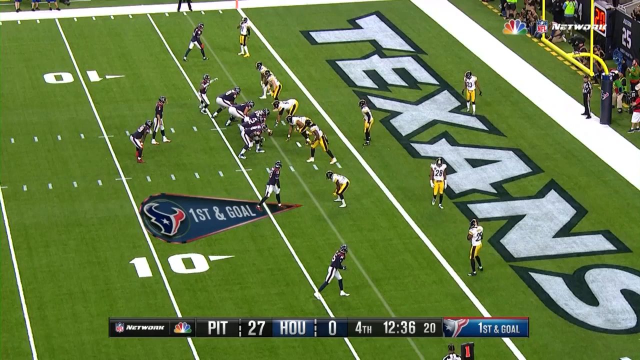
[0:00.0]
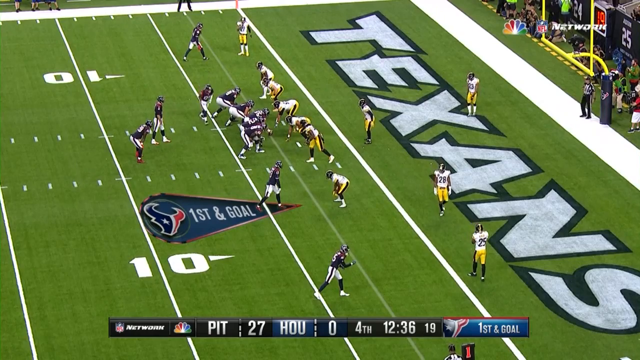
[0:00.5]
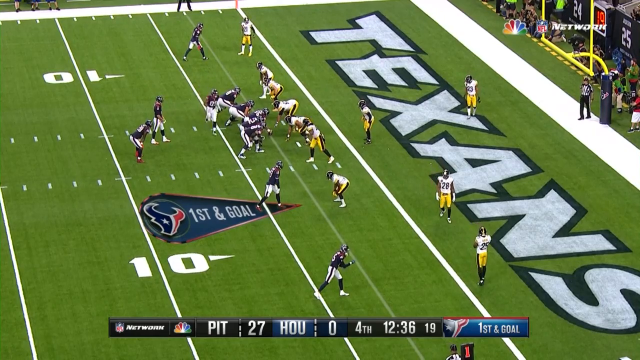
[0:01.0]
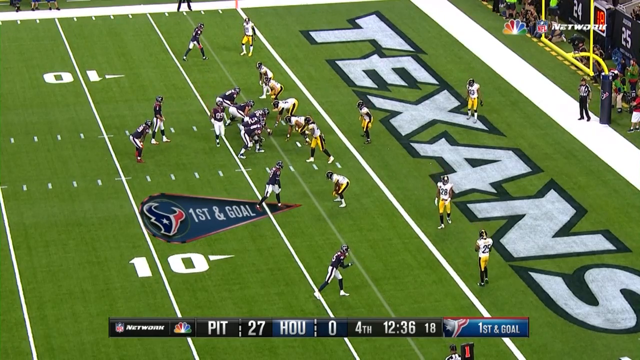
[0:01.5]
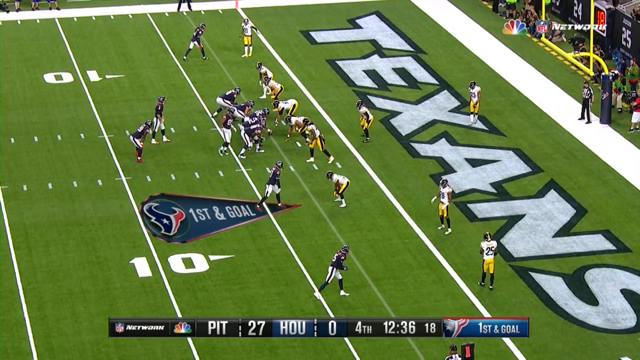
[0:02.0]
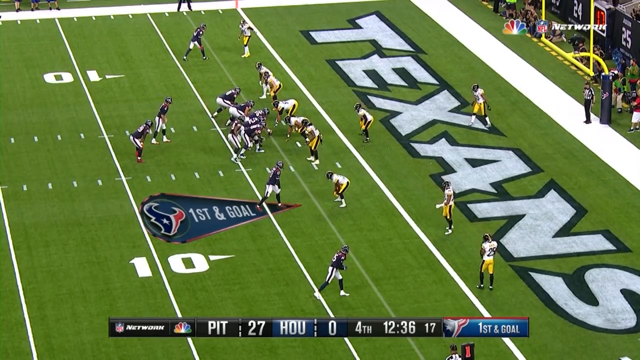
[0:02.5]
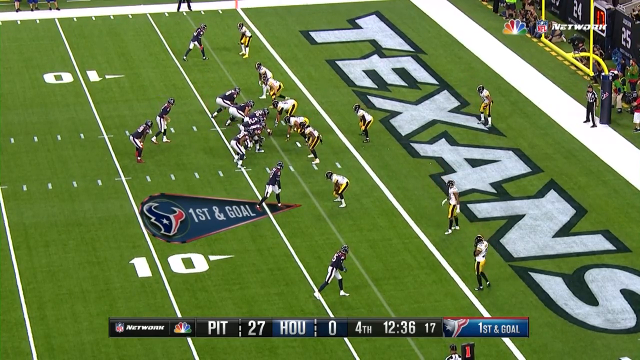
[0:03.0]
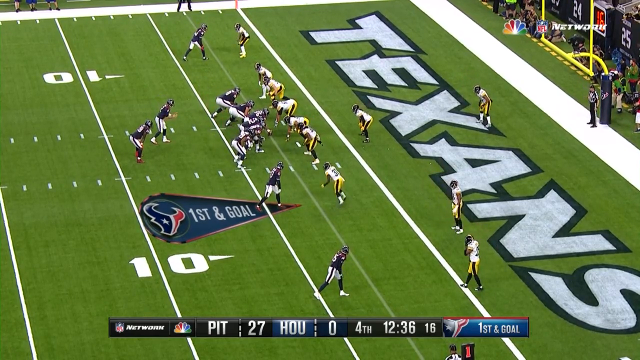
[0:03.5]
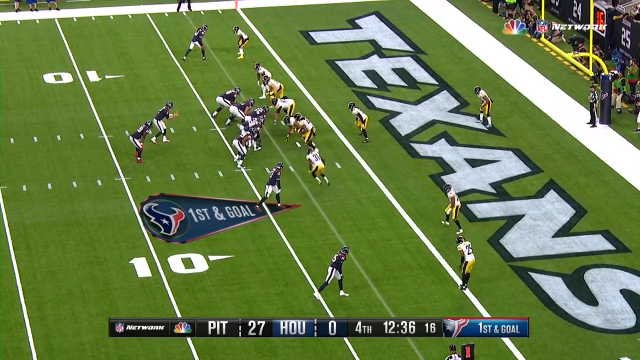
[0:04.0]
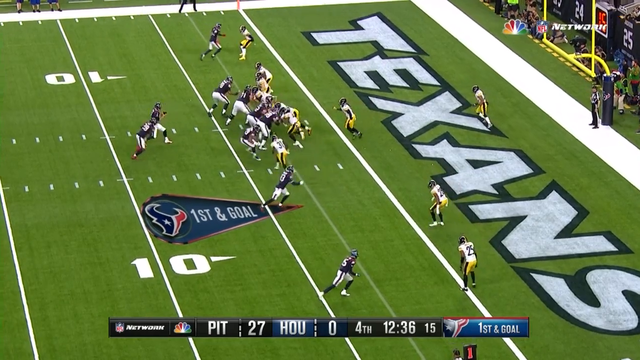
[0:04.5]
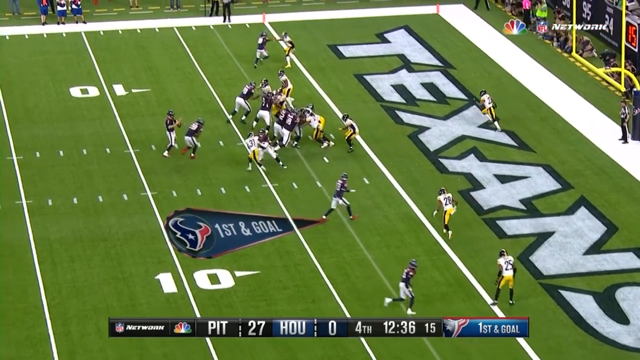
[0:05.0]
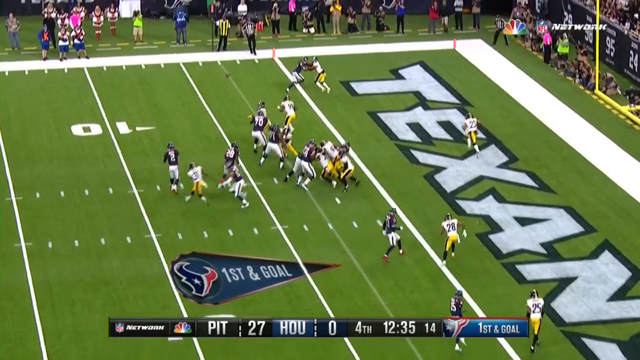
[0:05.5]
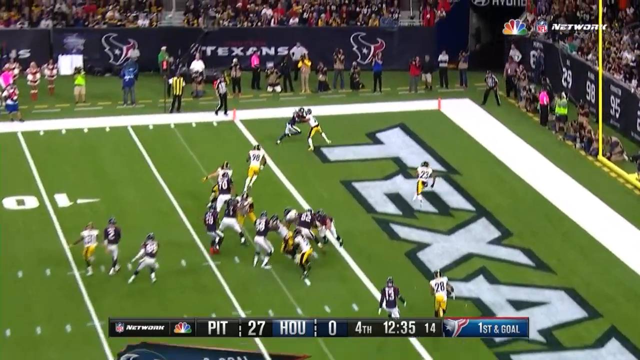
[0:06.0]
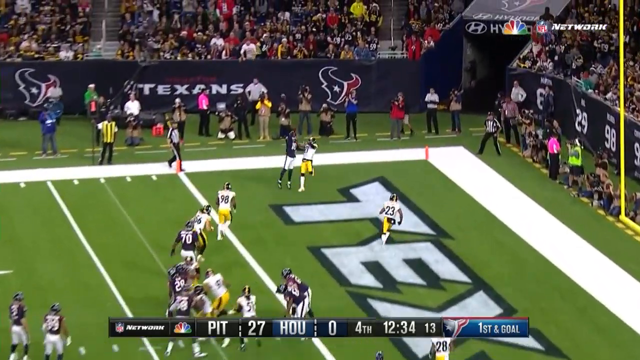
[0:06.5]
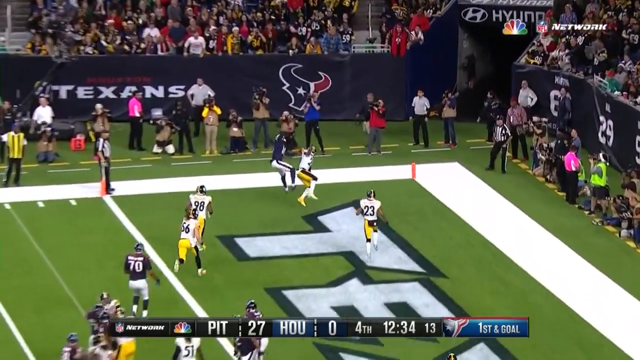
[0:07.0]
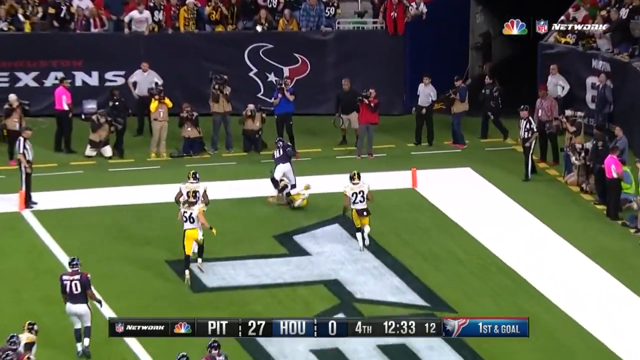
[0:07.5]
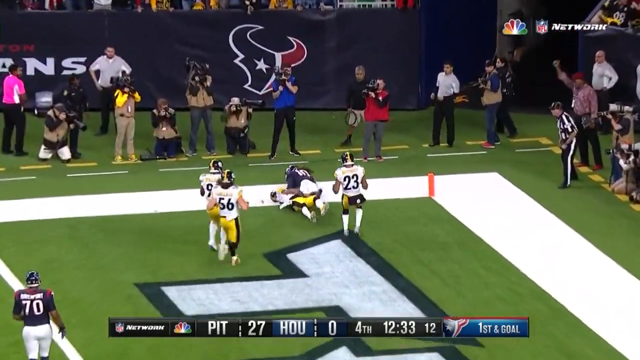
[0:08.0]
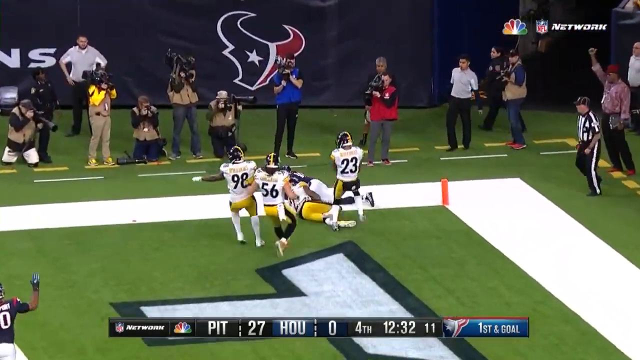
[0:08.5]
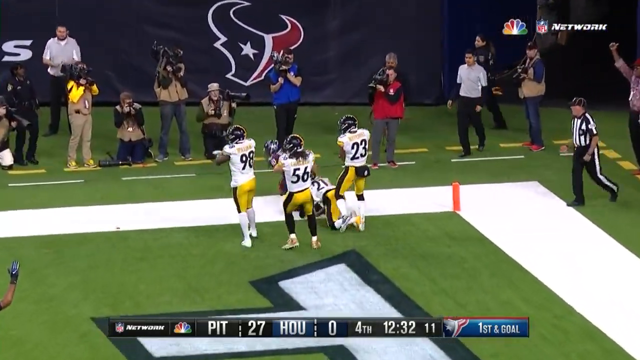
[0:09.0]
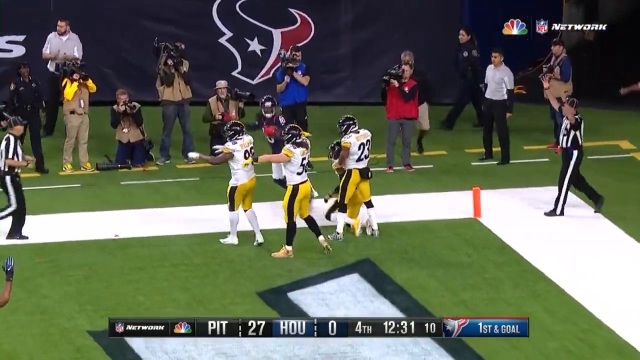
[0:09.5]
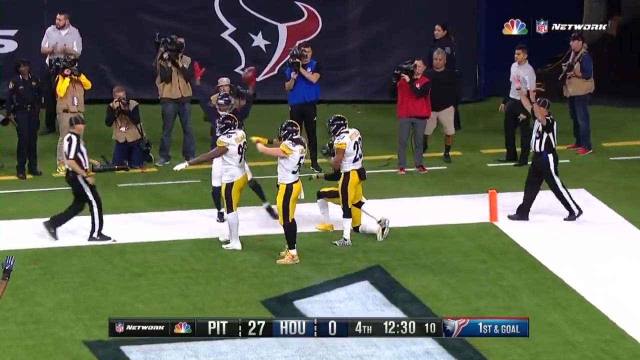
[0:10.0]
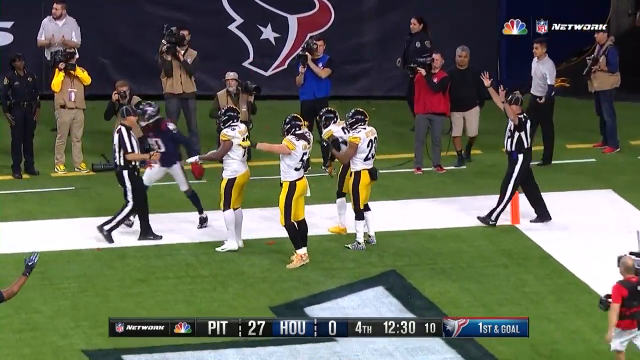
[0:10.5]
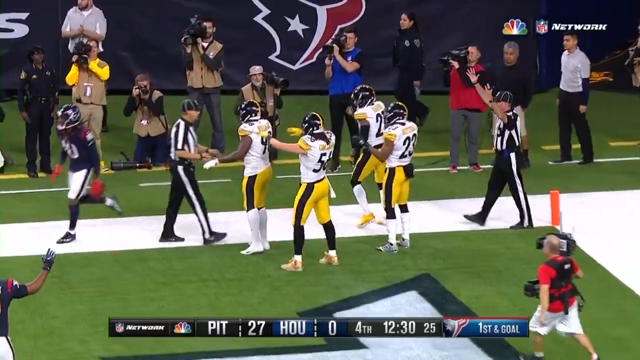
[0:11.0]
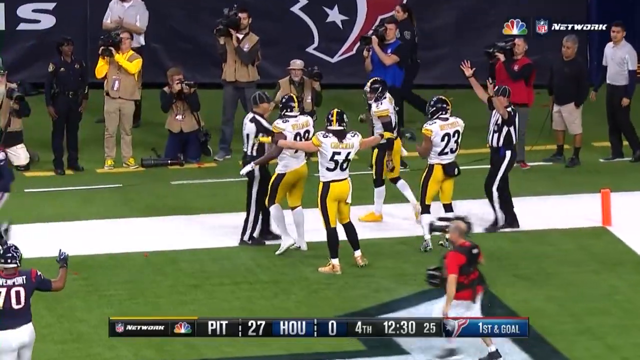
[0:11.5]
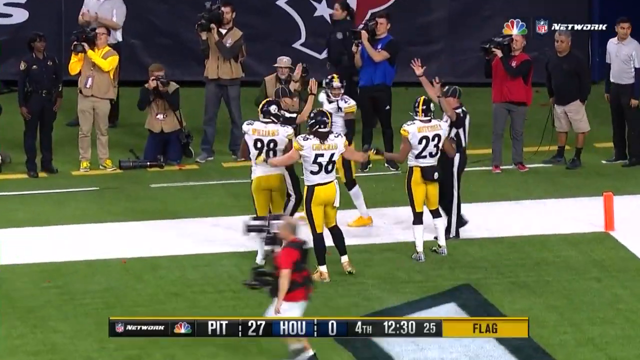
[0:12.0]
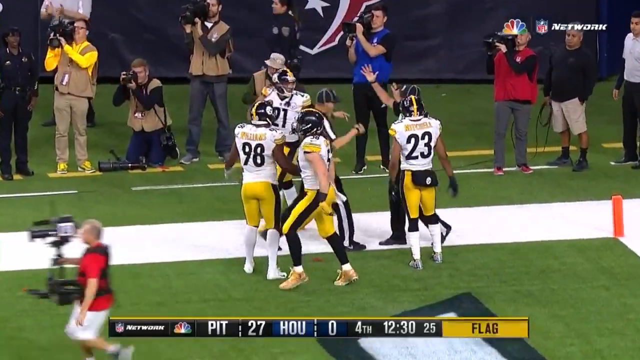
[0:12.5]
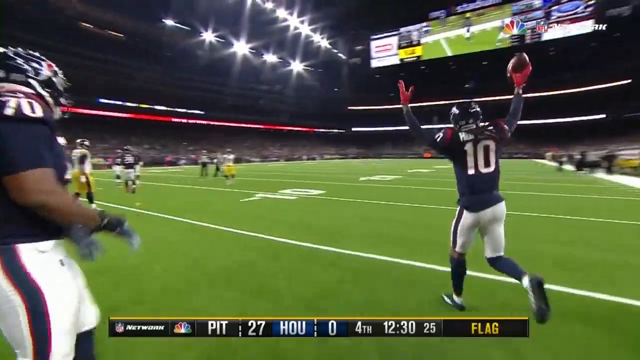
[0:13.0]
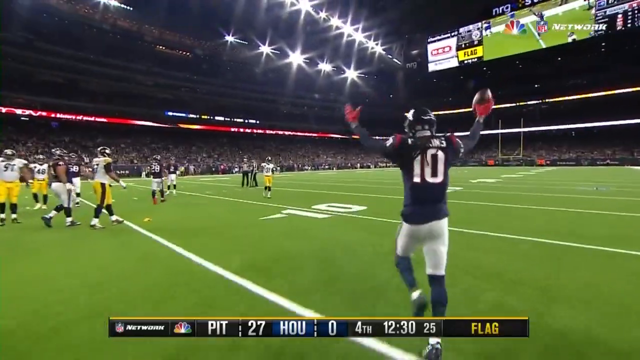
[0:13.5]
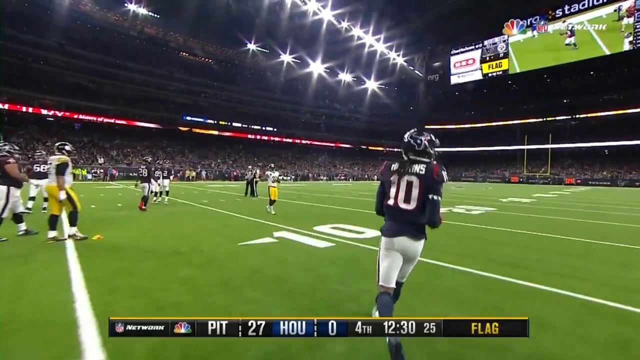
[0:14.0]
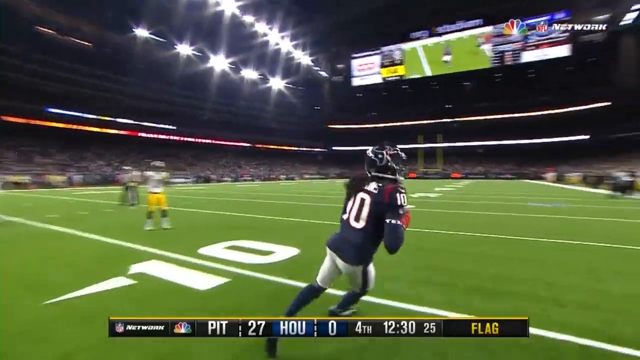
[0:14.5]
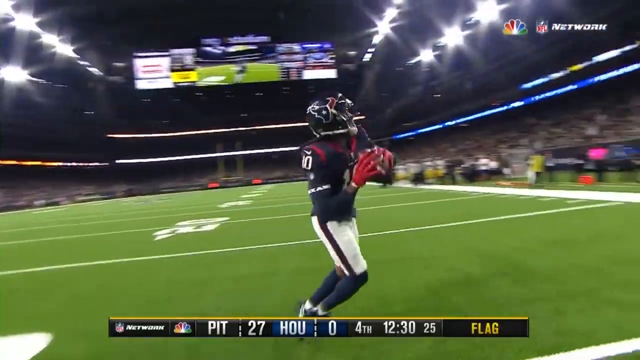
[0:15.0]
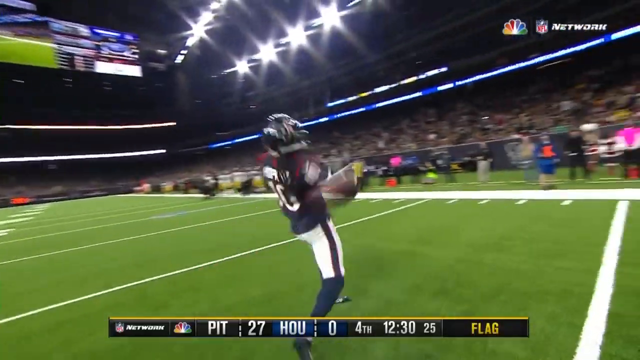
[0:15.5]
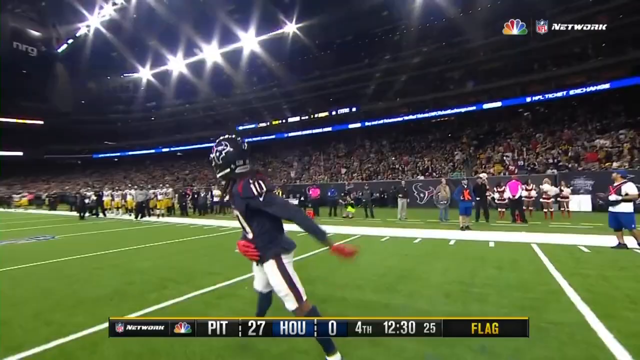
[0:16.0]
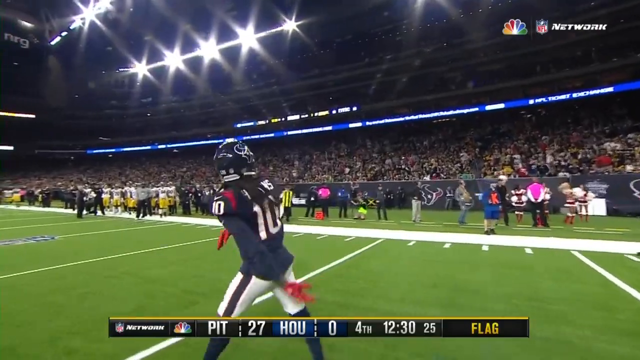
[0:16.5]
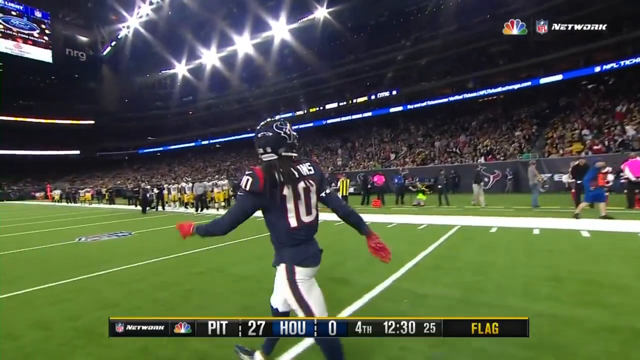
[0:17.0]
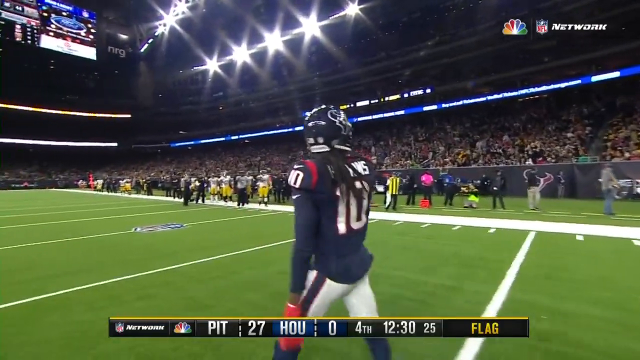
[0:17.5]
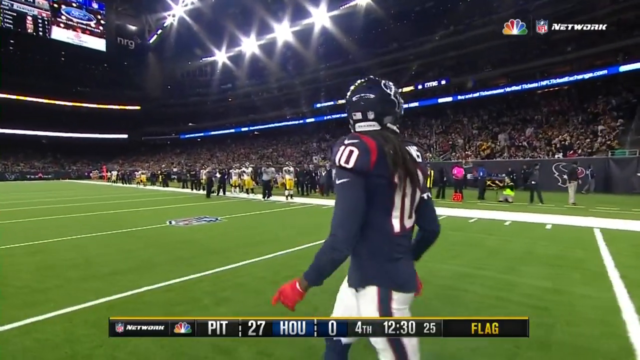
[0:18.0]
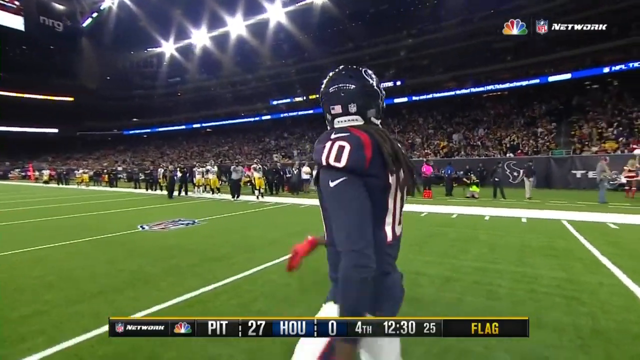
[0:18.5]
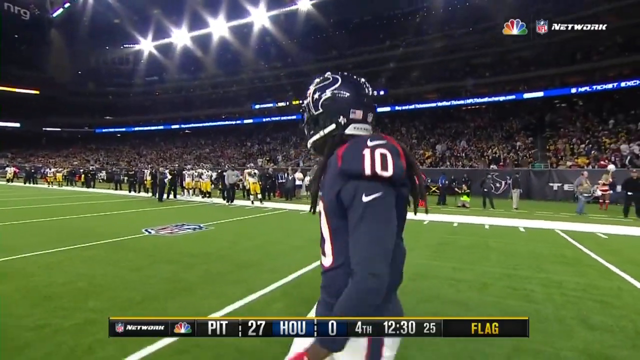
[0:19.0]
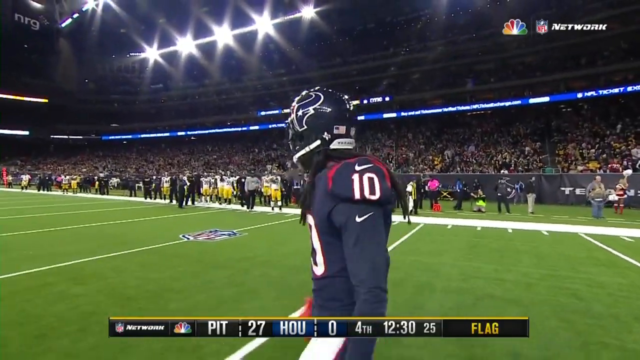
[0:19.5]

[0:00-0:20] In this NFL game, DeAndre Hopkins plays for the Texans against the Steelers, on NBC's Sunday Night Football. A fade pass goes to the corner of the end zone while Hopkins is hand-to-hand with the cornerback. Hopkins goes up, tips the ball with his right hand, and comes down with it in his left hand, getting his feet inbounds. The referees signal a touchdown, and Hopkins celebrates by throwing the ball into the stands.